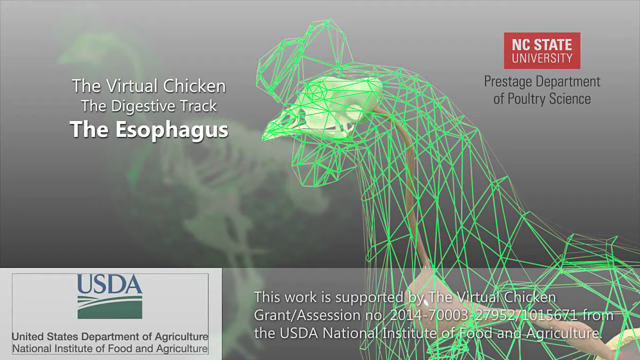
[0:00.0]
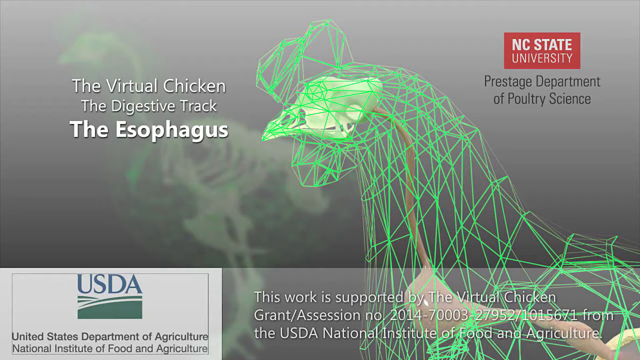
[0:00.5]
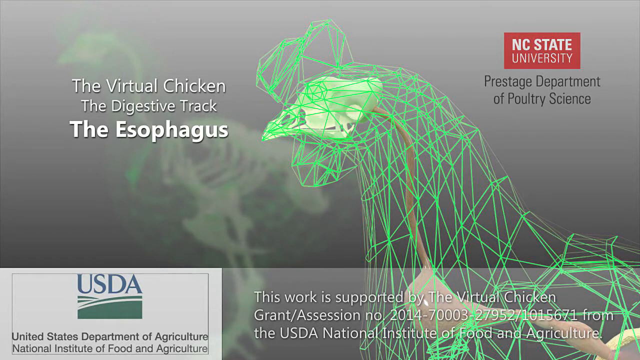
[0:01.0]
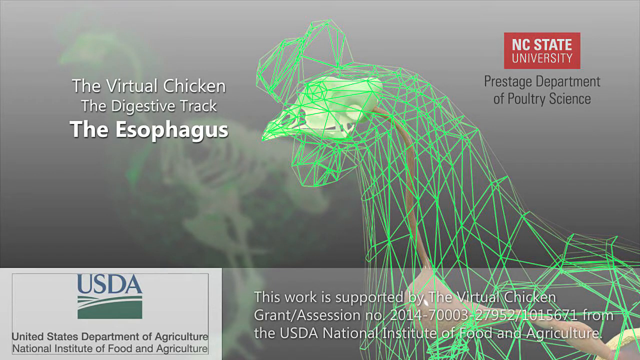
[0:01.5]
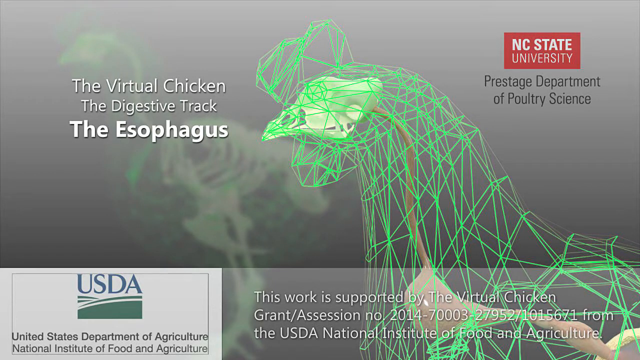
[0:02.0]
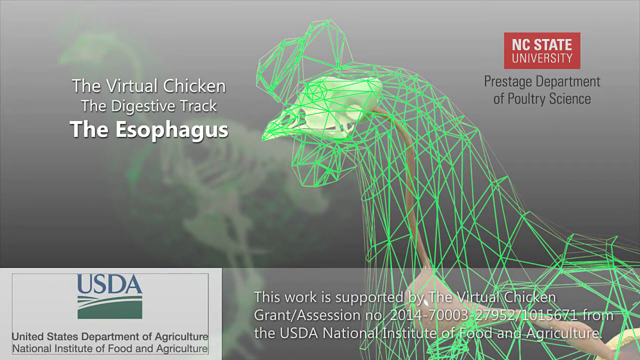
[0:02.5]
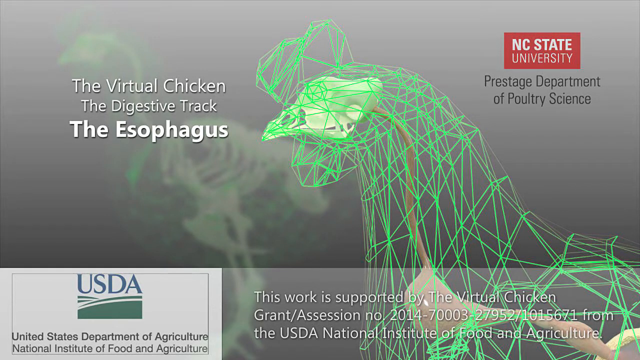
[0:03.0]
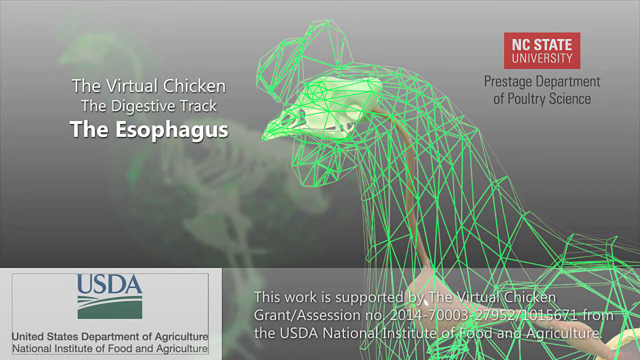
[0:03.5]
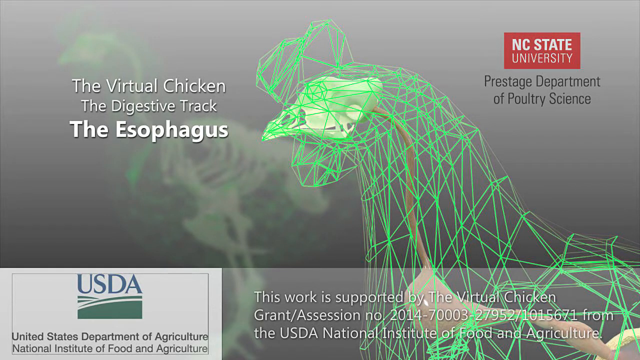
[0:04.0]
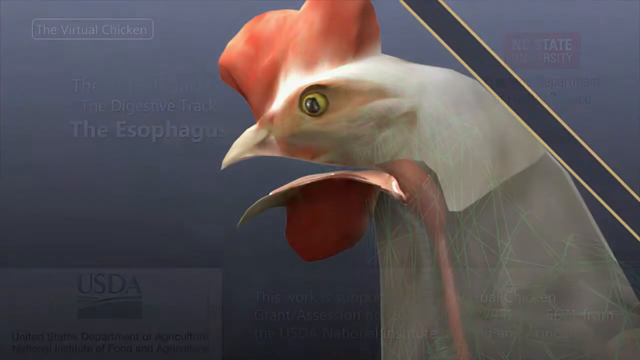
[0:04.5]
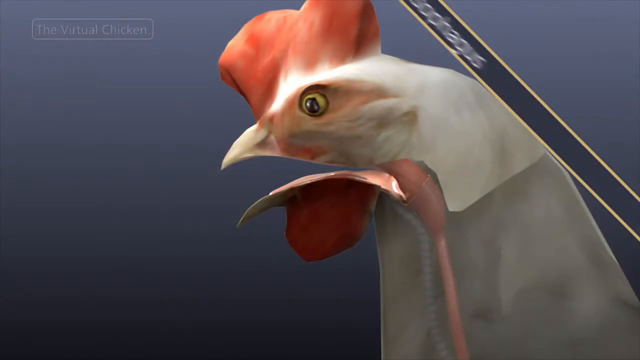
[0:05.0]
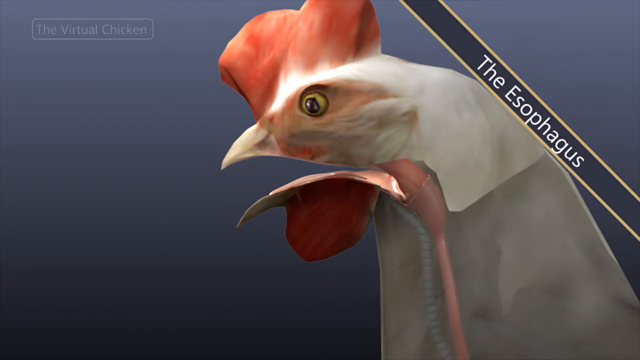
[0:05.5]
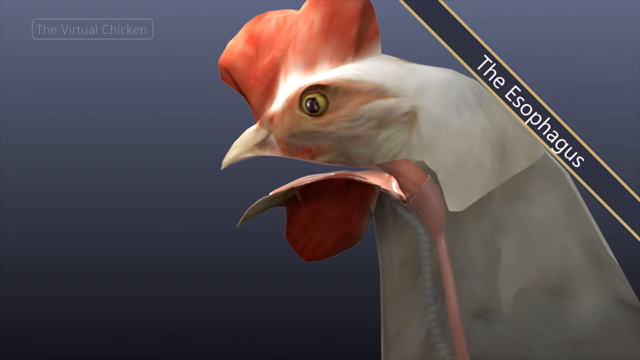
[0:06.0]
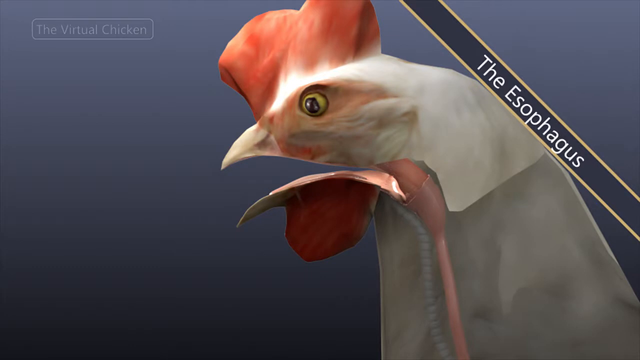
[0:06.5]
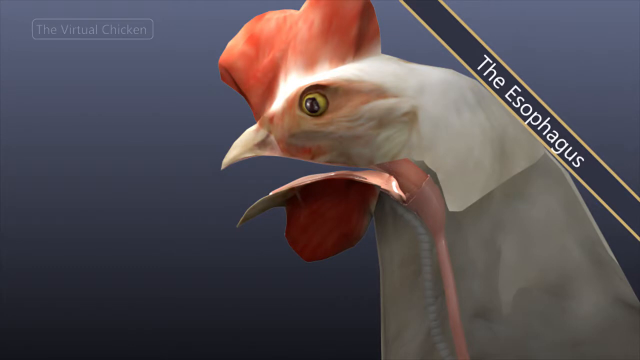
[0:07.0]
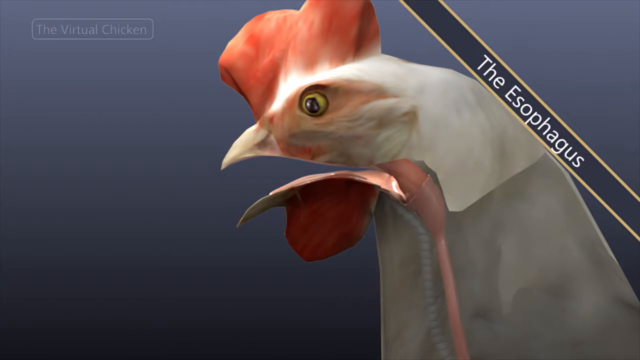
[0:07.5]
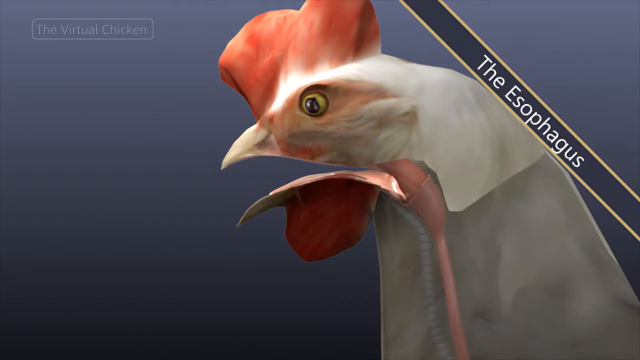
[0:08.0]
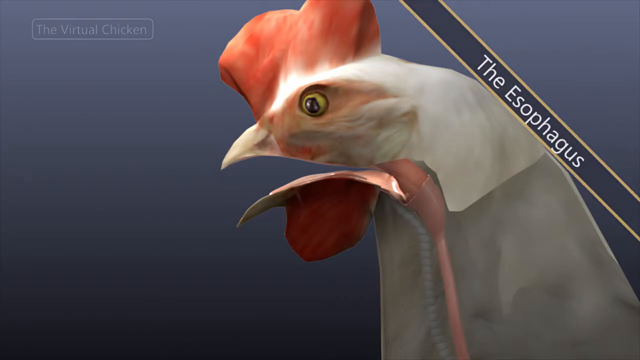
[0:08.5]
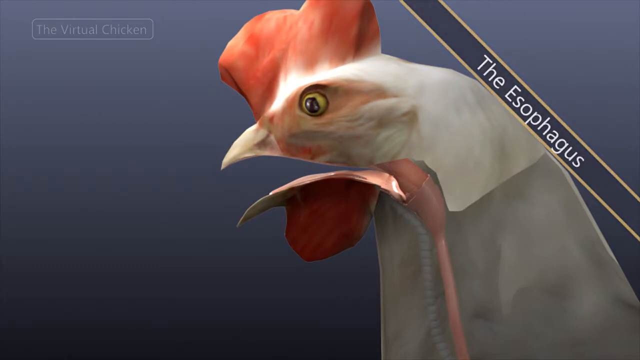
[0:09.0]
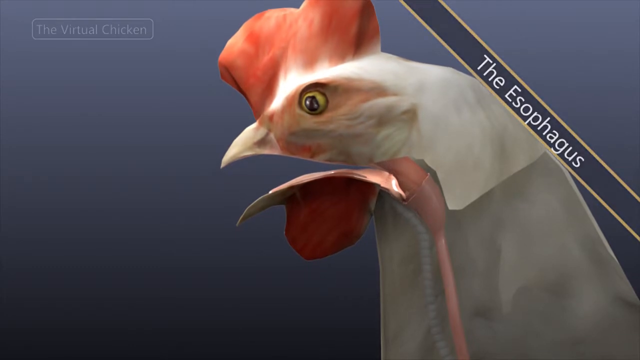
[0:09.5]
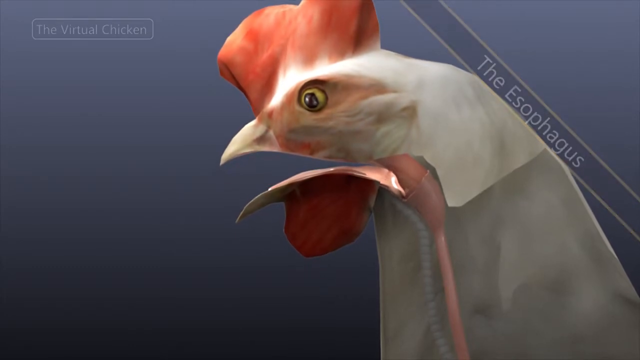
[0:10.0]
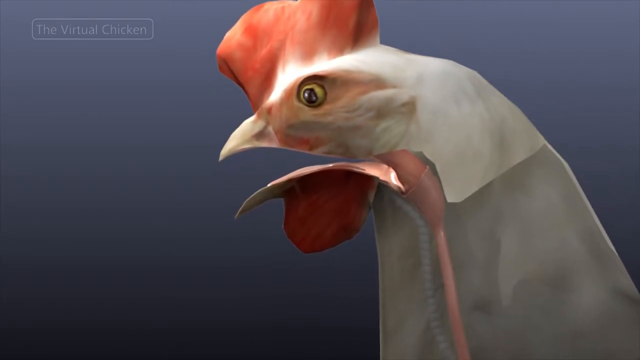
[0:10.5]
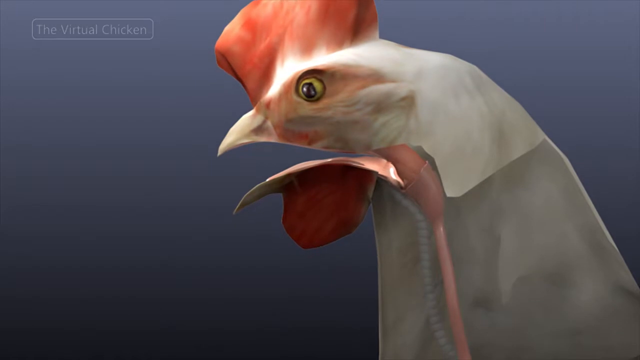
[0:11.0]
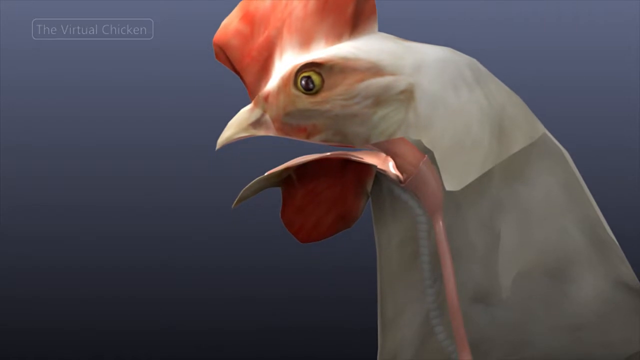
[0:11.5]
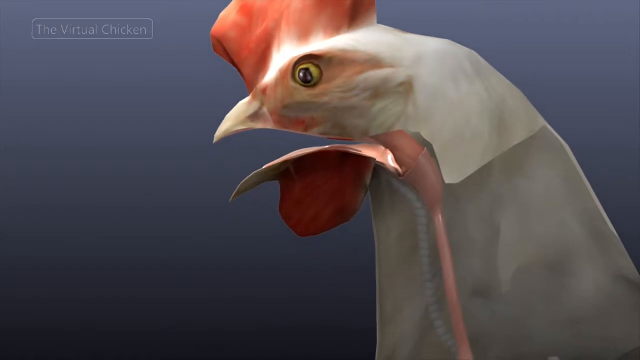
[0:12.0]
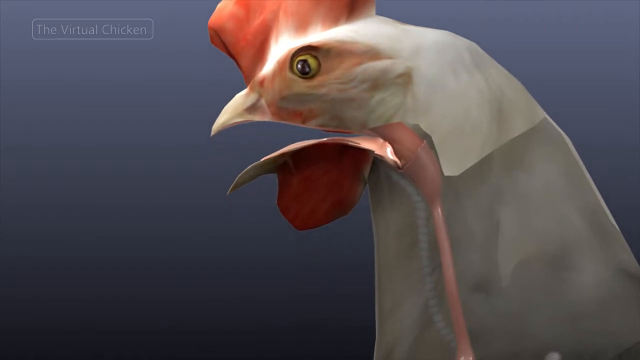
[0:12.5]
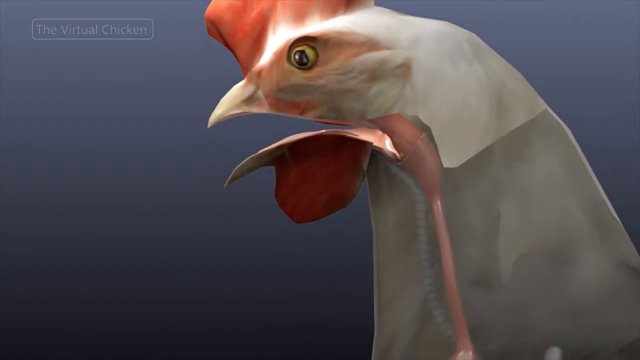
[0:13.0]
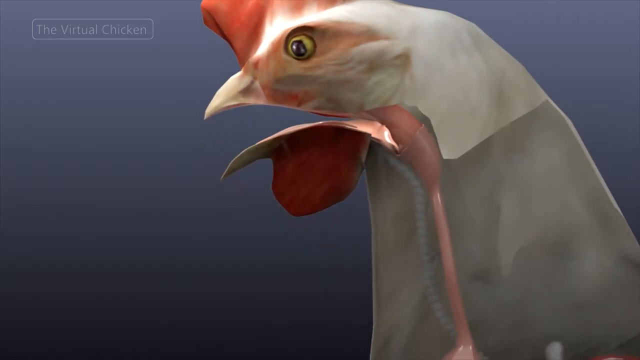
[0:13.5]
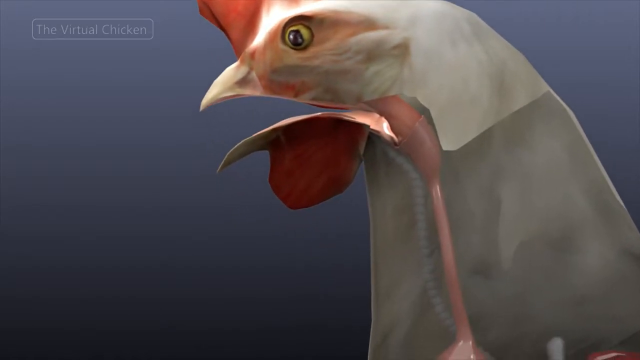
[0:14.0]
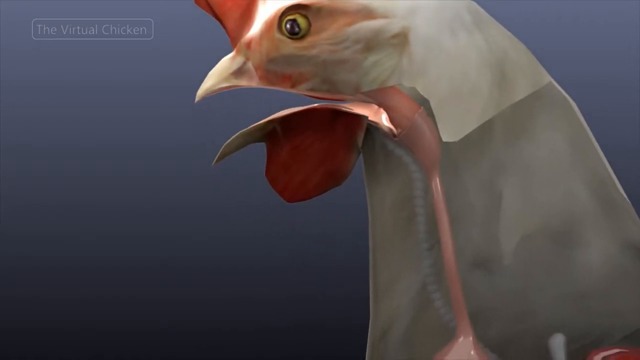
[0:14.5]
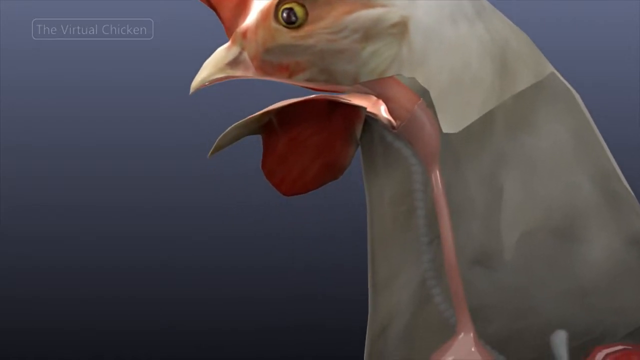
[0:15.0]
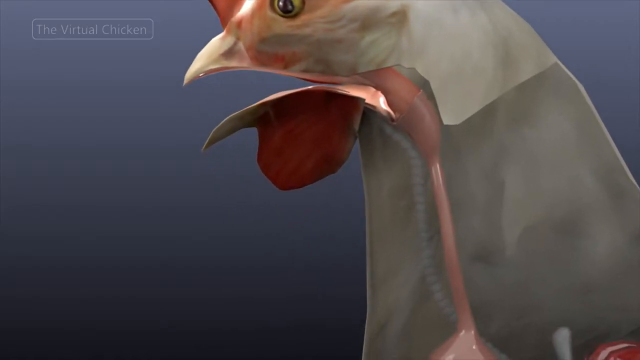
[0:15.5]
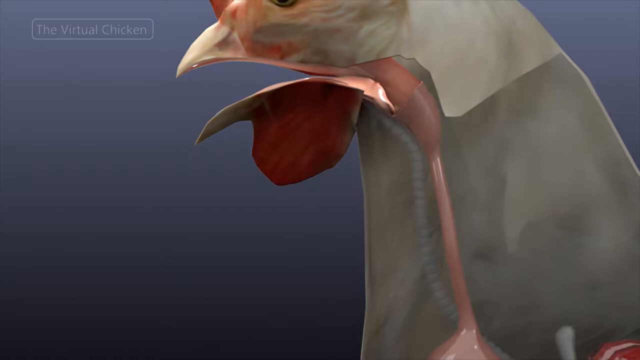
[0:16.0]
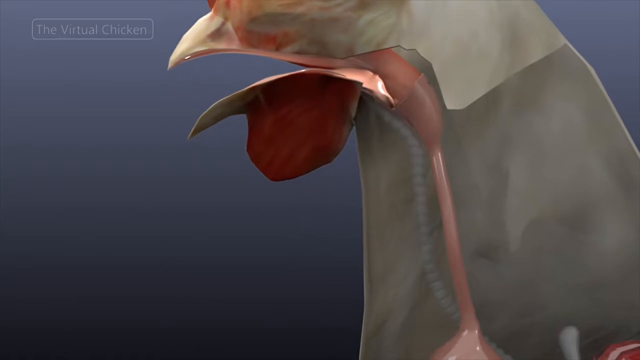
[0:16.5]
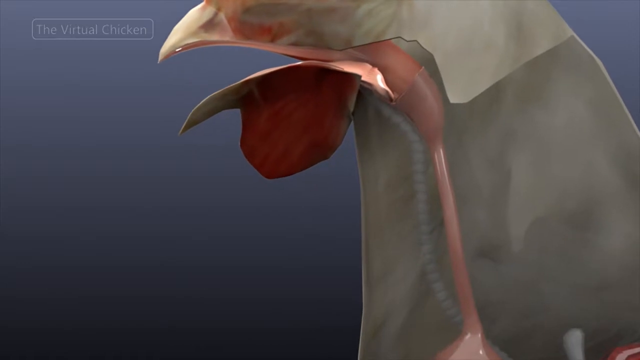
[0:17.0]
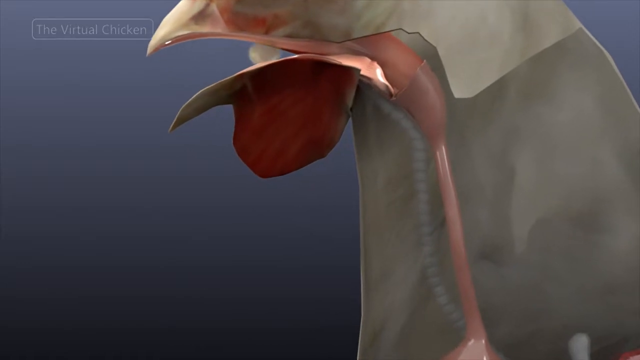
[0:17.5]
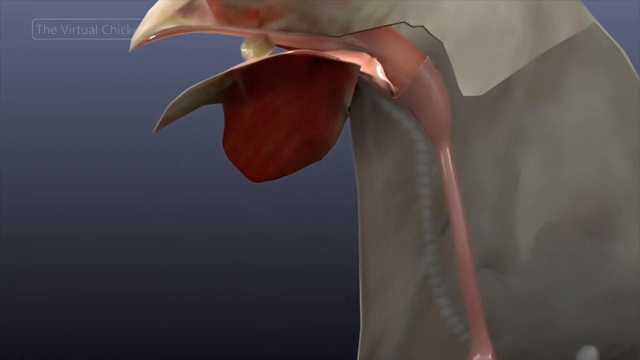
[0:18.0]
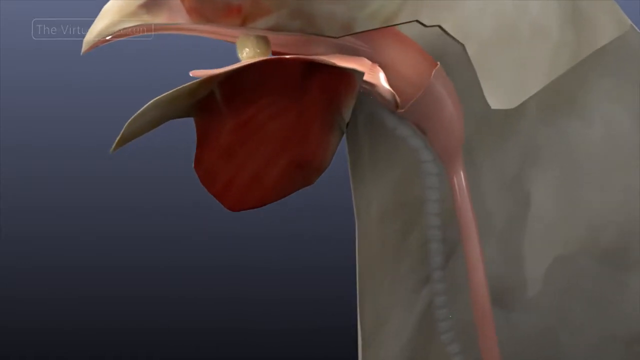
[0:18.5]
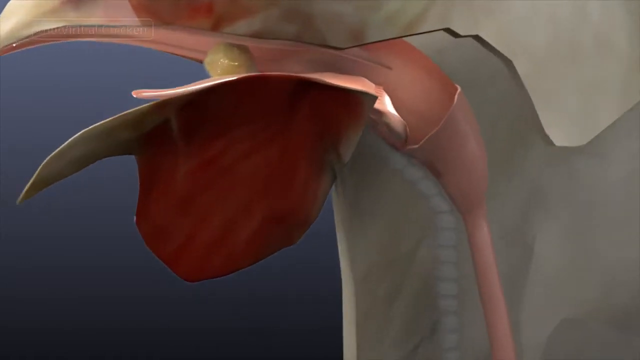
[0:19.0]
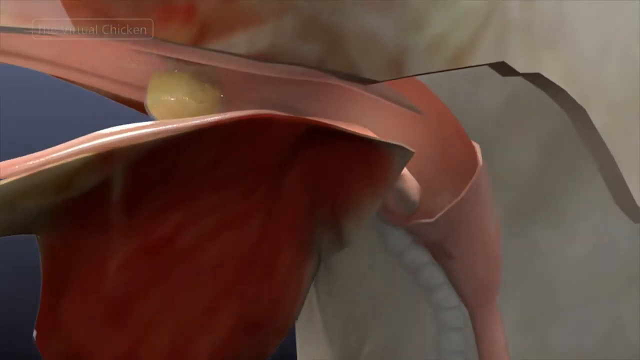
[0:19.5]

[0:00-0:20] The head and neck of a chicken are shown, with the path of the chicken's esophagus, where the food goes down. Text on screen reads "virtual chicken digestive tract". Something moves down through the esophagus. NC State University and the Department of Poultry Science appear in connection with the video.